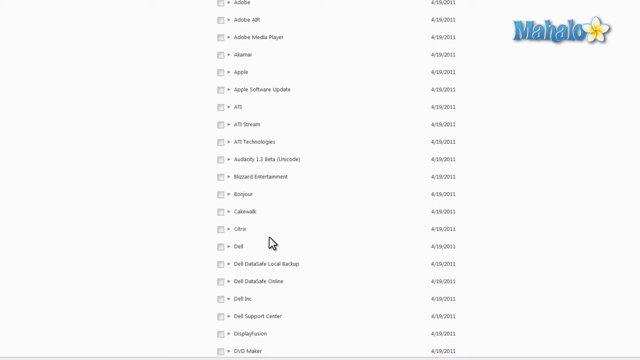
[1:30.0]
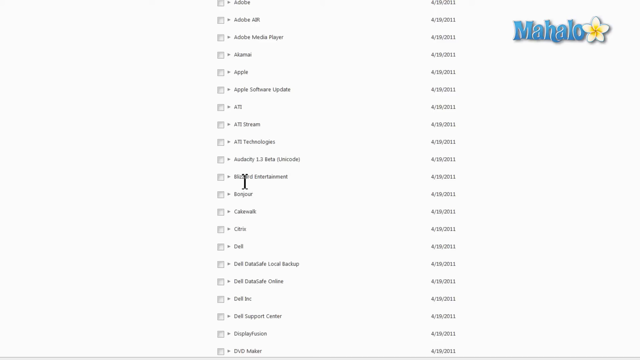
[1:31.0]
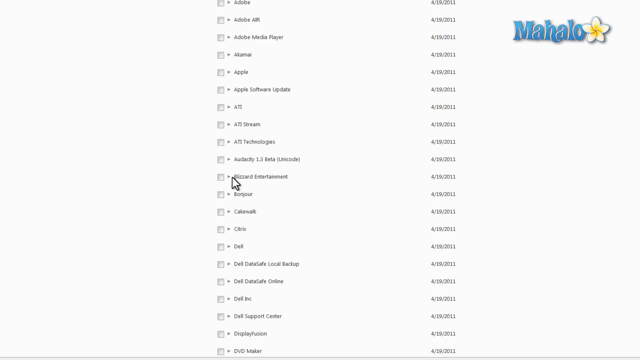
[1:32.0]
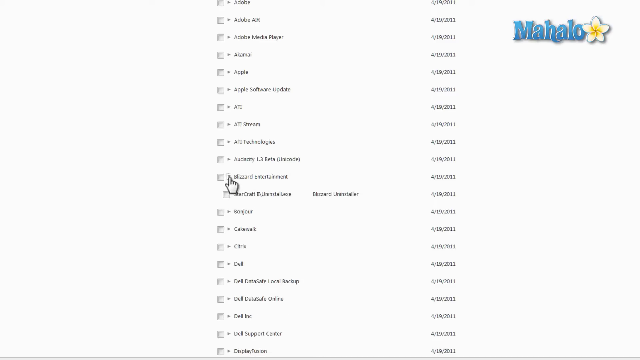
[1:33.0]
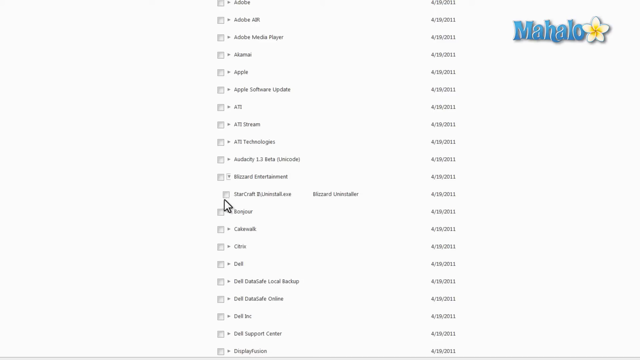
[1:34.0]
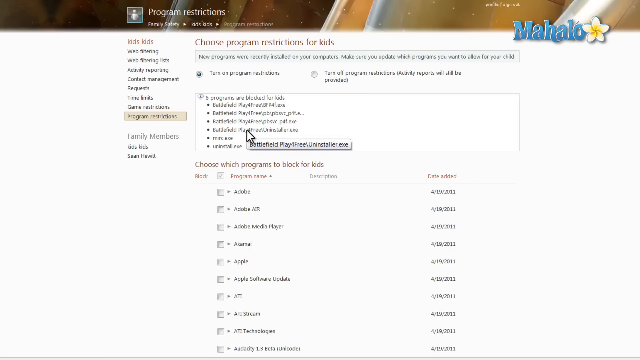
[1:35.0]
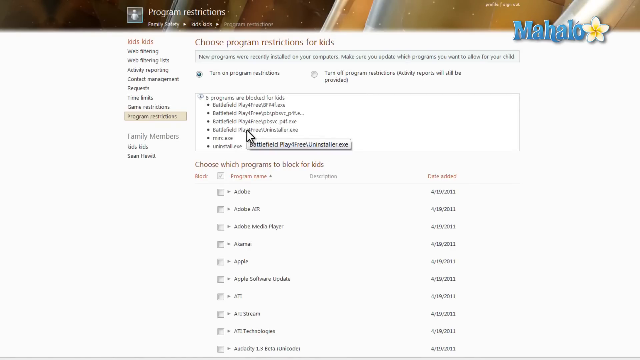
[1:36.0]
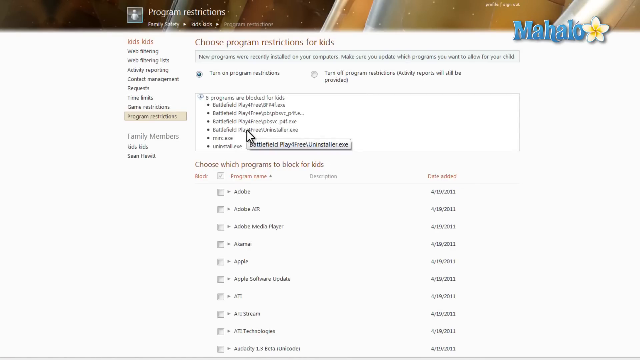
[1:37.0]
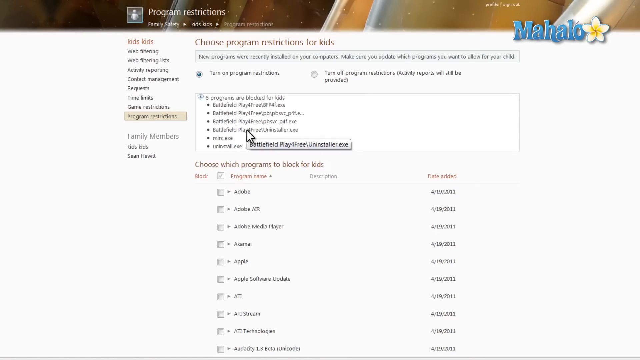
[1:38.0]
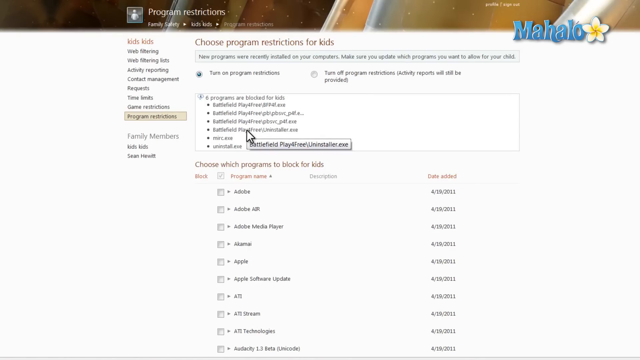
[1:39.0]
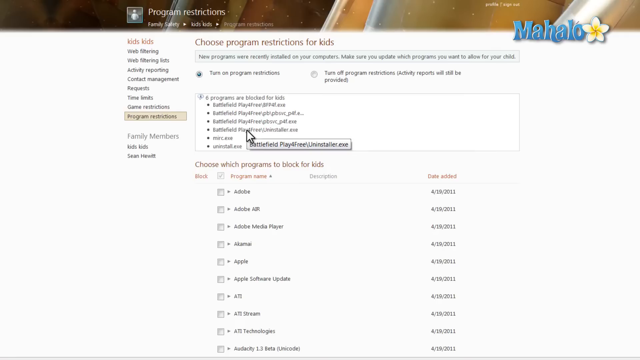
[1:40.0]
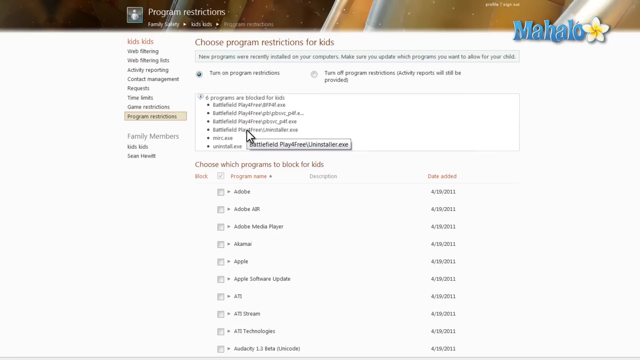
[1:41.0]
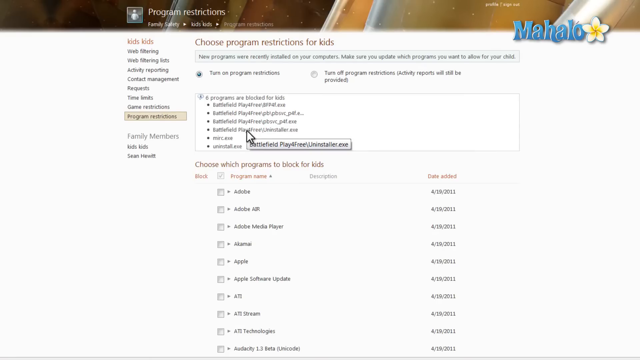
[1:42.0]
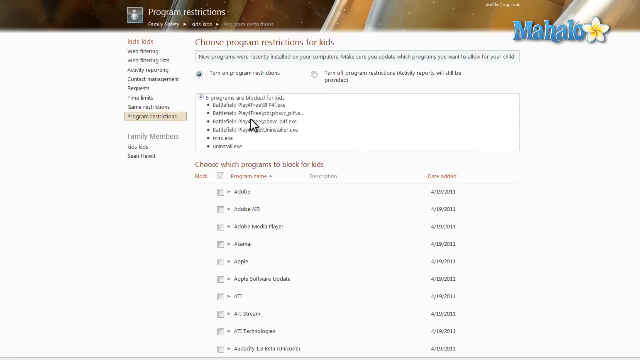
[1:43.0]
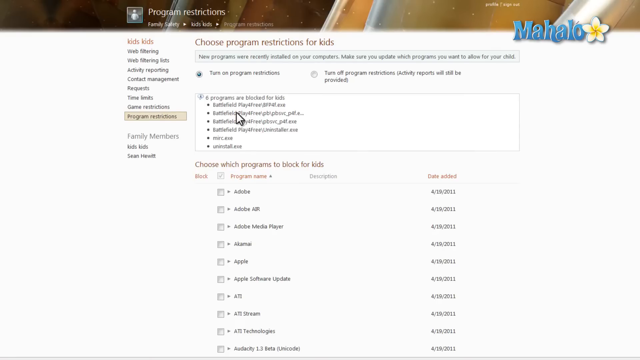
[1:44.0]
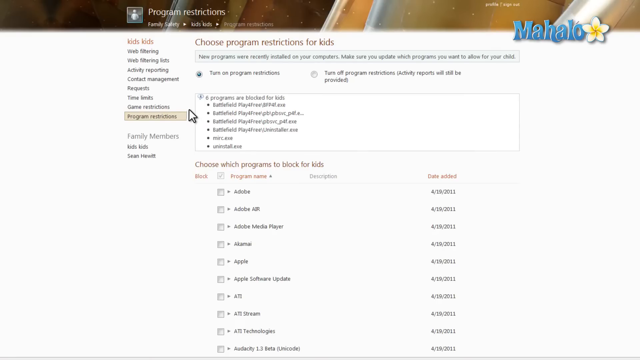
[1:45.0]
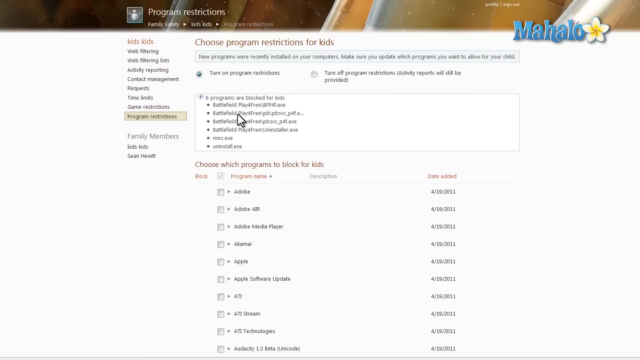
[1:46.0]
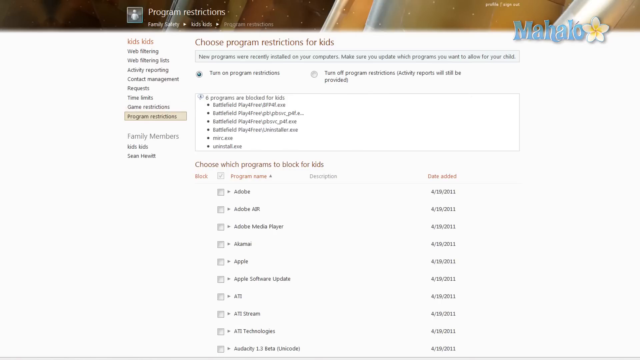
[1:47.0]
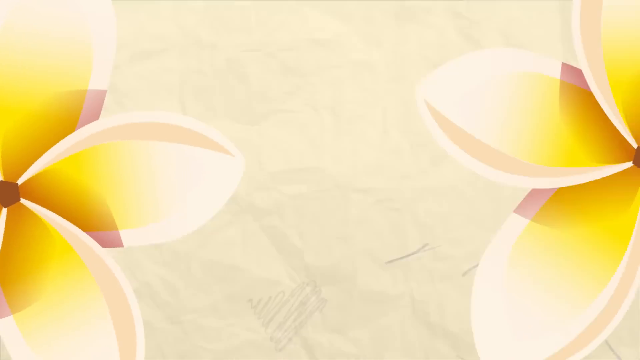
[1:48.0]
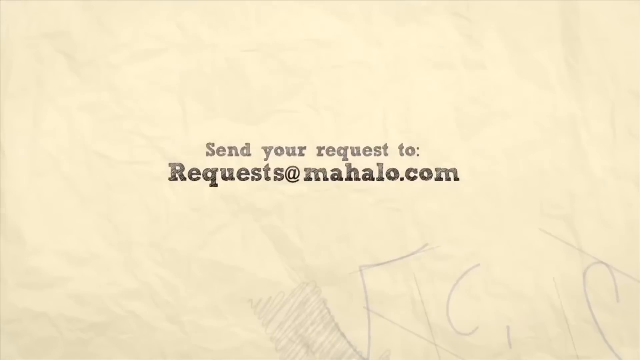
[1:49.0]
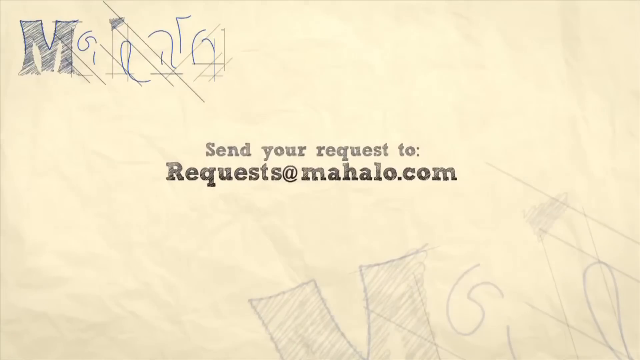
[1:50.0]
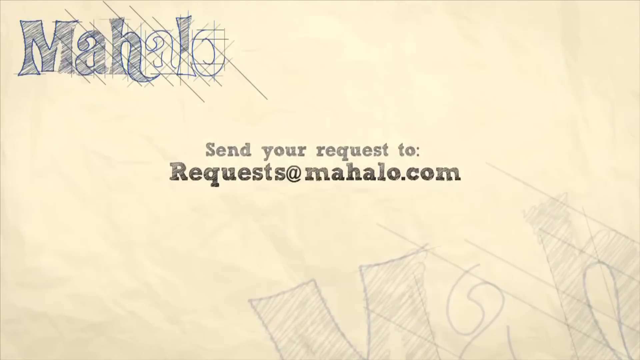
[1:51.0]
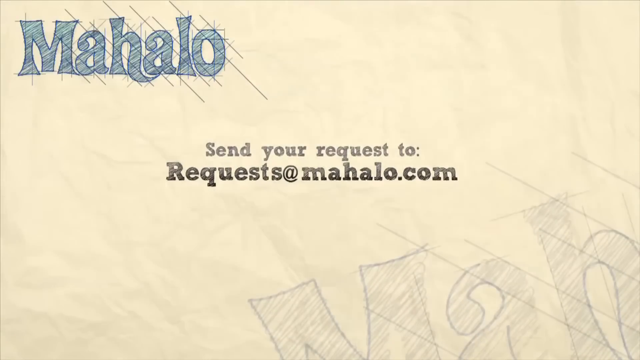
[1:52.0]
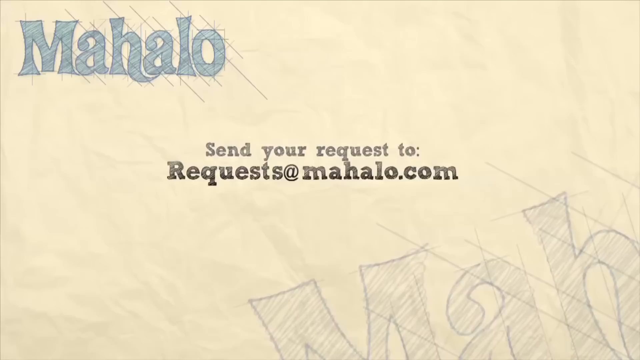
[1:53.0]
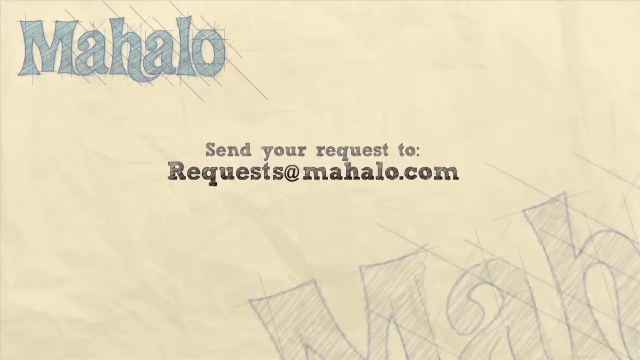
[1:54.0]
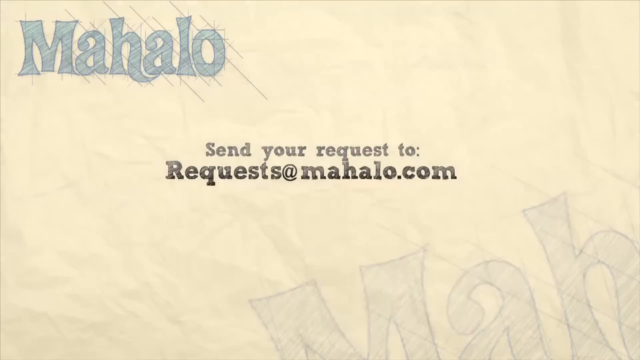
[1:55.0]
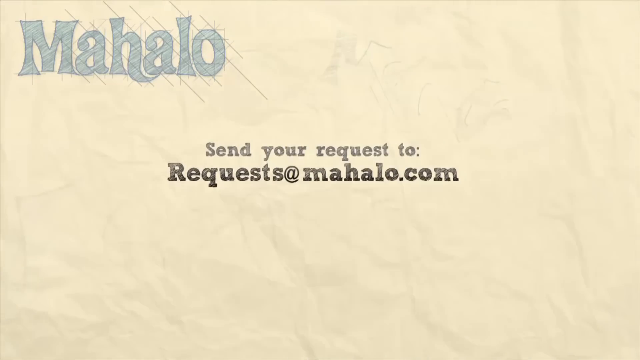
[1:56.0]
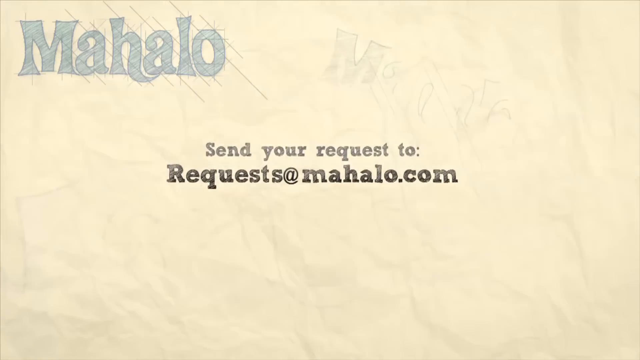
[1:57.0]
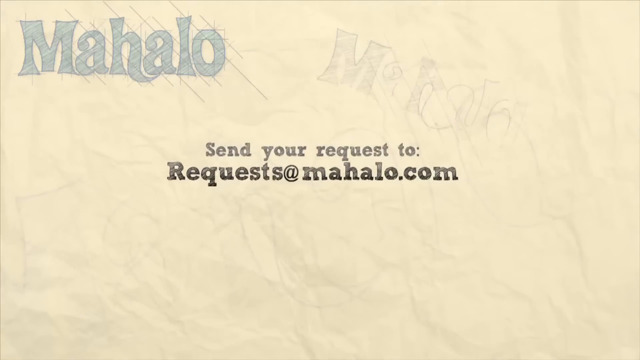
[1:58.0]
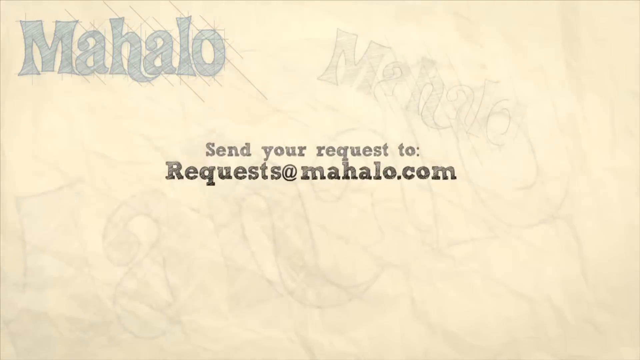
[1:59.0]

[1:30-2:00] Sean hovers over an app called Blizzard Entertainment. He moves his mouse slowly to the left and clicks the drop-down arrow, revealing a single option, StarCraft. He hovers around it, though it does not look like he clicks it, before going back to the top of the screen. At the top, the blocked programs are listed: all the Battlefield ones from EA, then AMC, and then what looks like possibly uninstalled from StarCraft, so he may have clicked it after all. He talks more while moving his mouse left and right. A flower transition follows, leading to a background that says "send your requests to" and then "requests at mahalo.com." The Mahalo name appears in the top left corner, and there is a very light screen flashing as the request email shakes up, down, left and right a little.